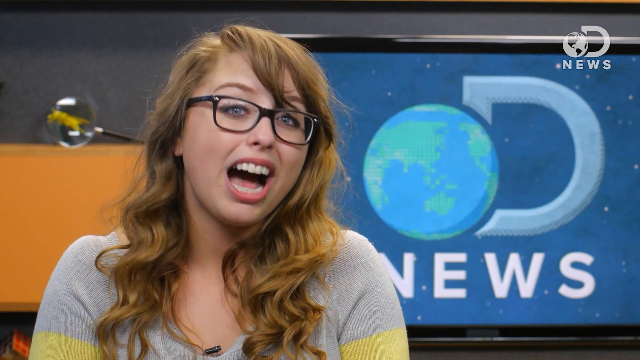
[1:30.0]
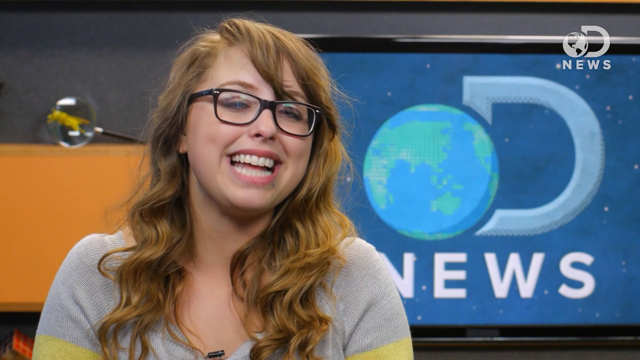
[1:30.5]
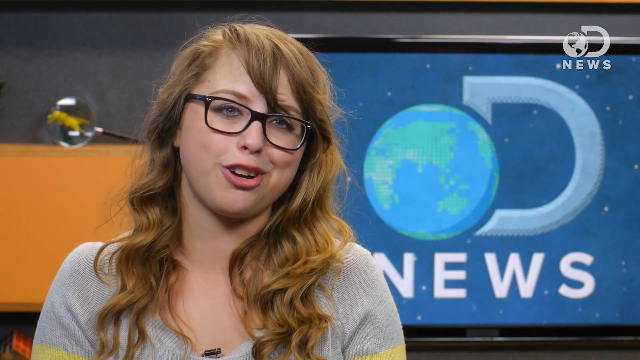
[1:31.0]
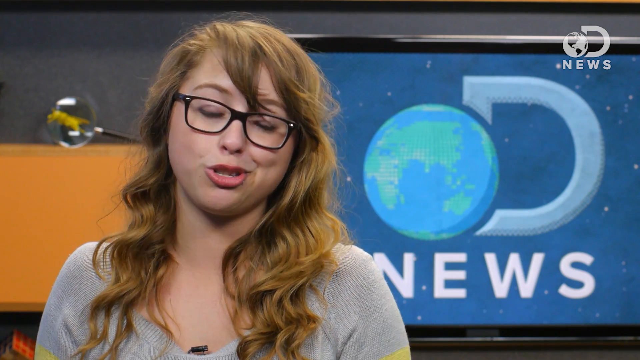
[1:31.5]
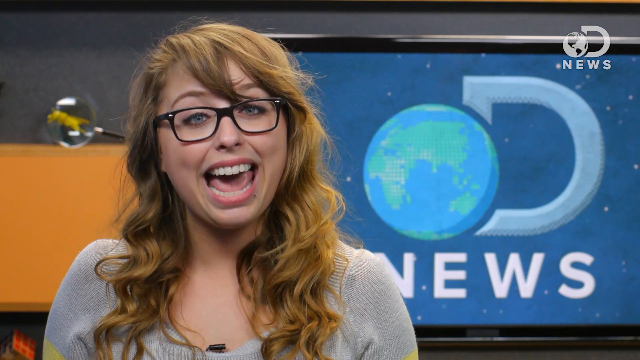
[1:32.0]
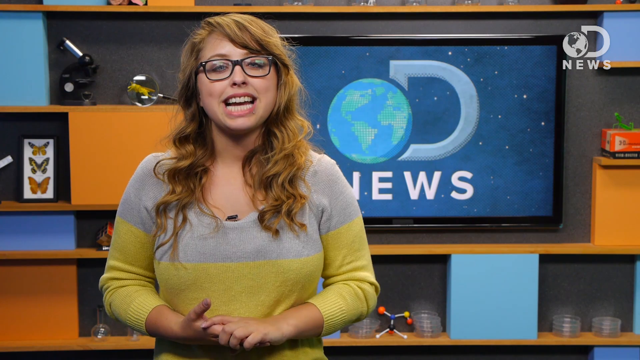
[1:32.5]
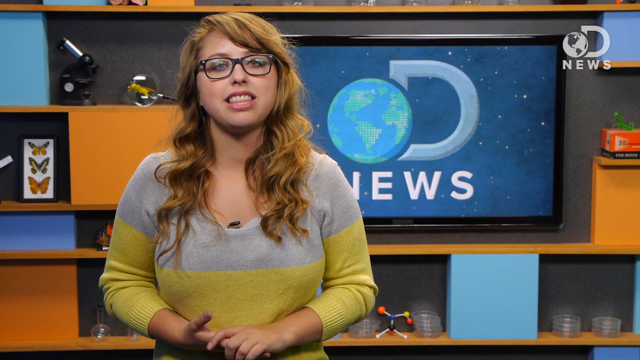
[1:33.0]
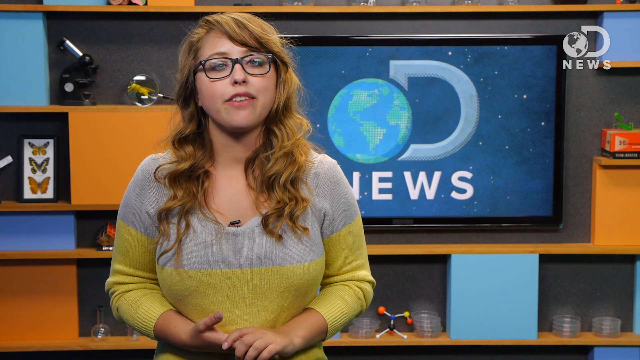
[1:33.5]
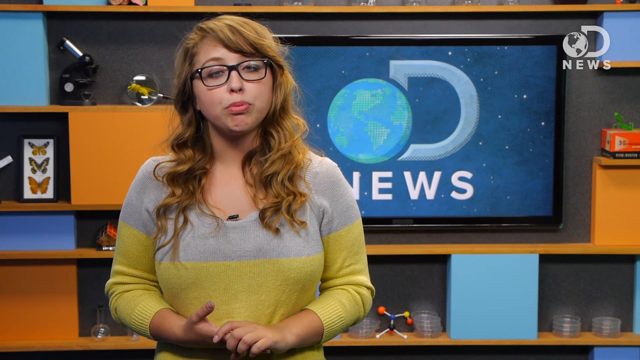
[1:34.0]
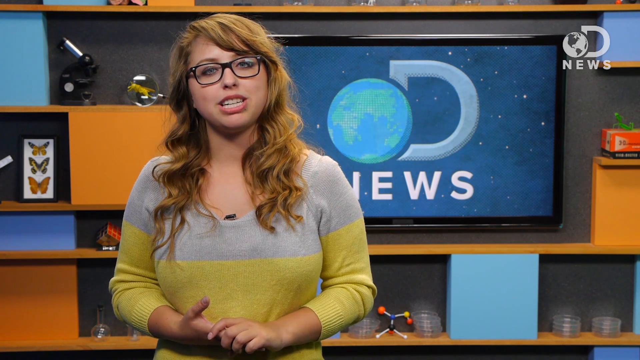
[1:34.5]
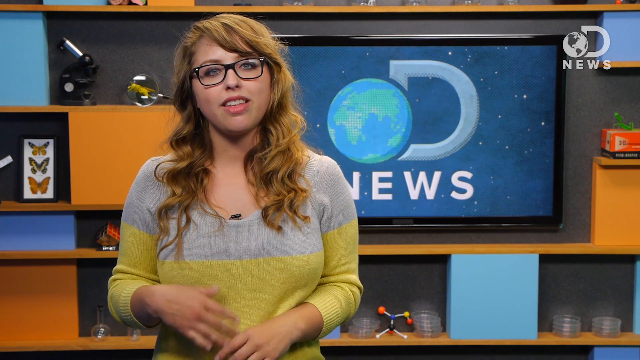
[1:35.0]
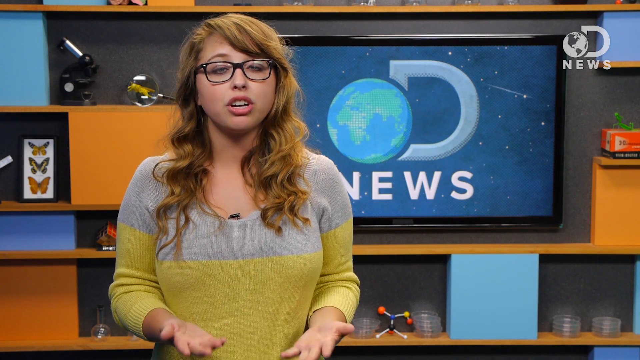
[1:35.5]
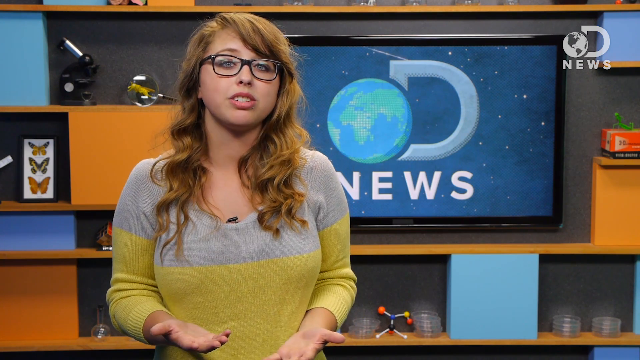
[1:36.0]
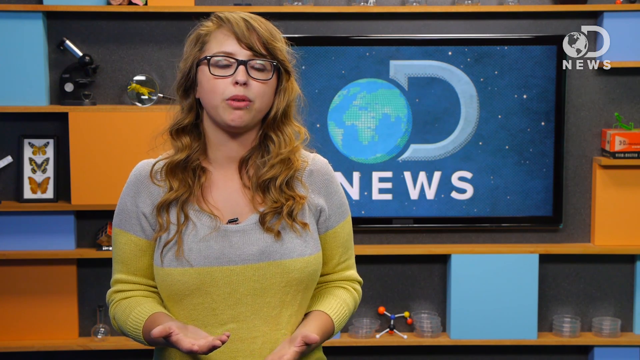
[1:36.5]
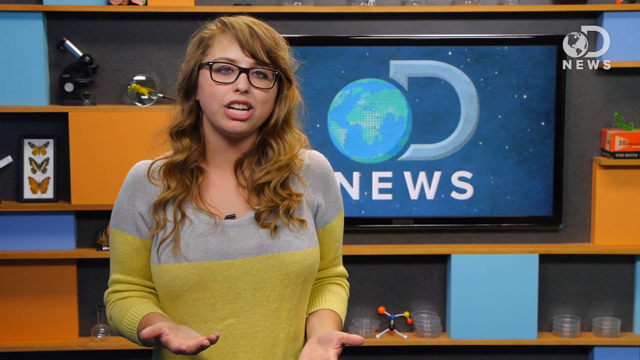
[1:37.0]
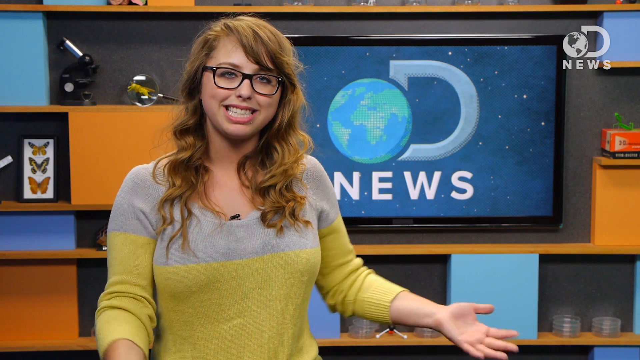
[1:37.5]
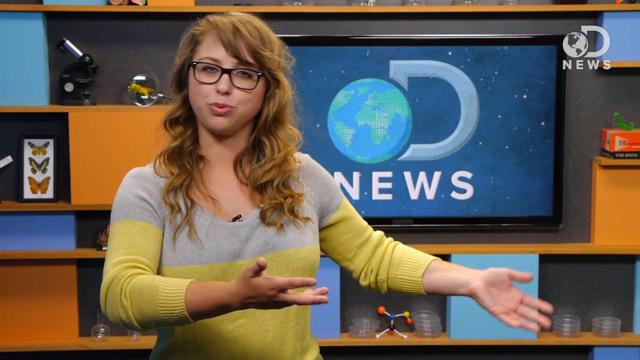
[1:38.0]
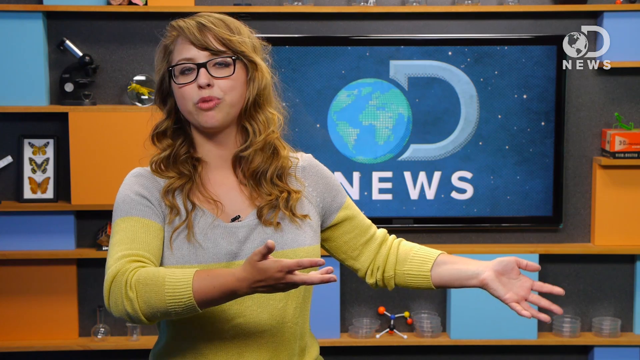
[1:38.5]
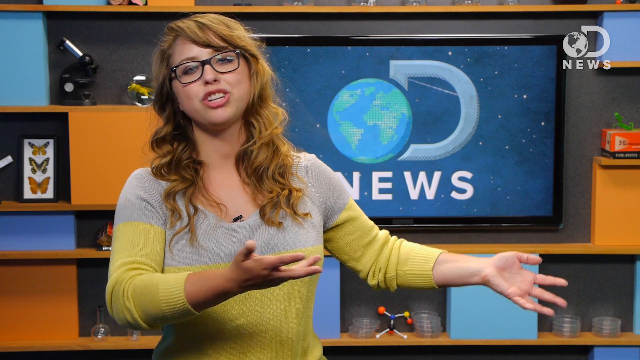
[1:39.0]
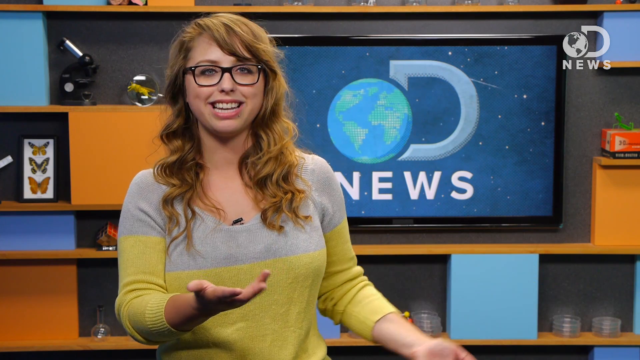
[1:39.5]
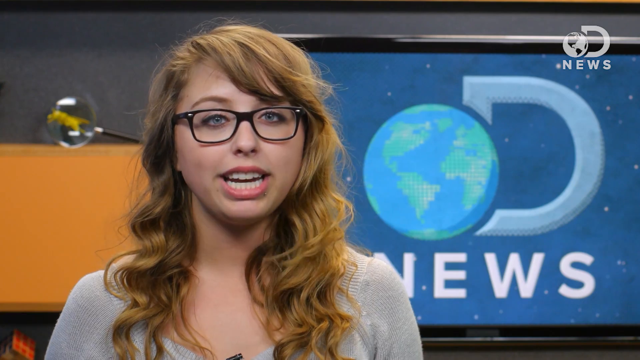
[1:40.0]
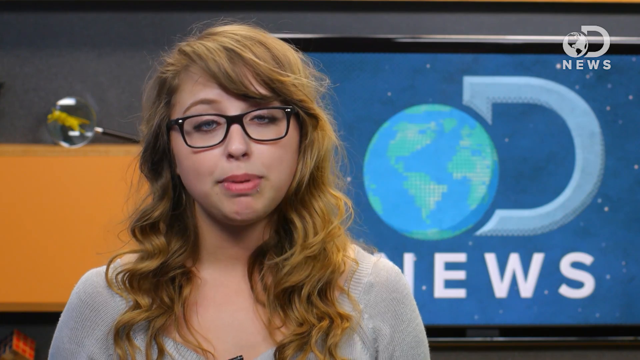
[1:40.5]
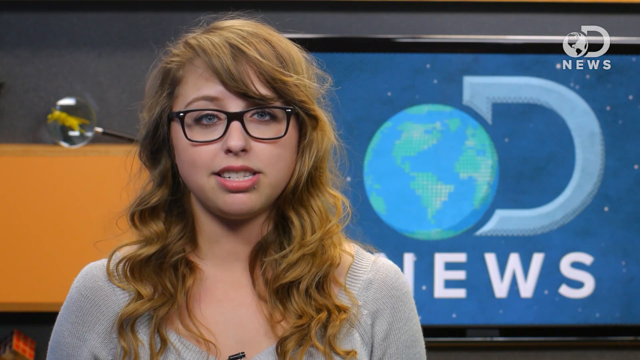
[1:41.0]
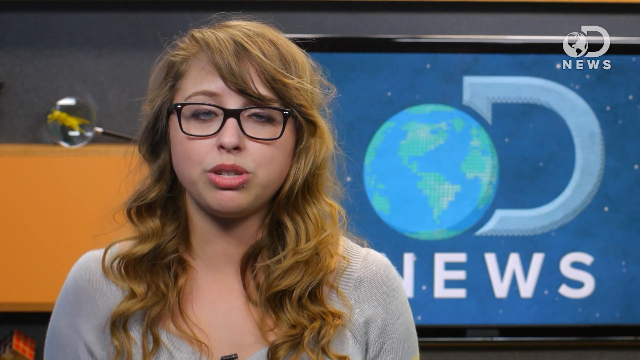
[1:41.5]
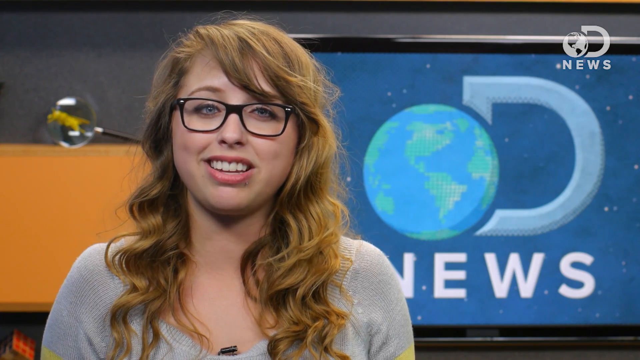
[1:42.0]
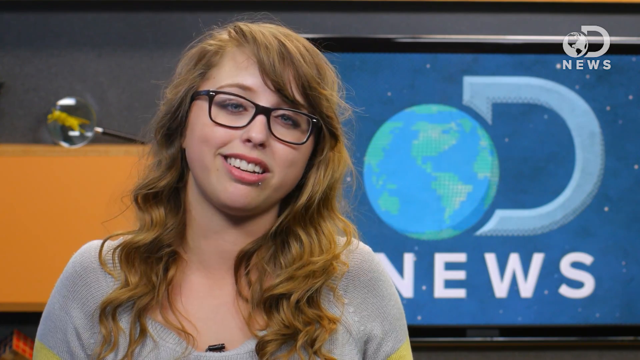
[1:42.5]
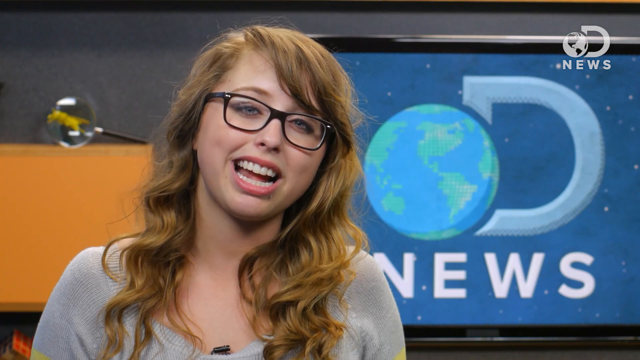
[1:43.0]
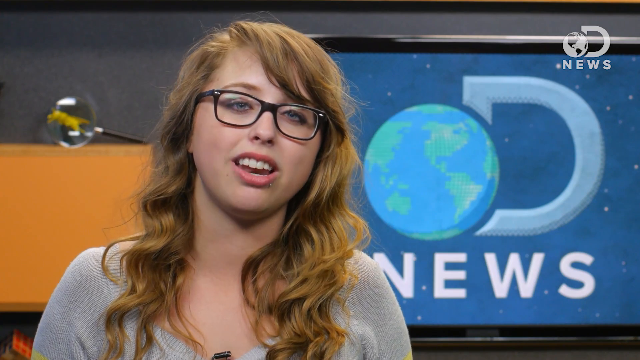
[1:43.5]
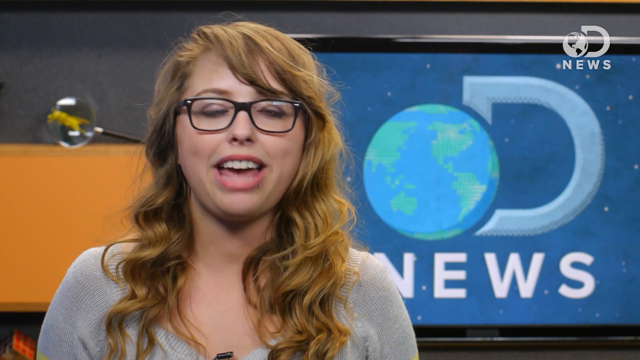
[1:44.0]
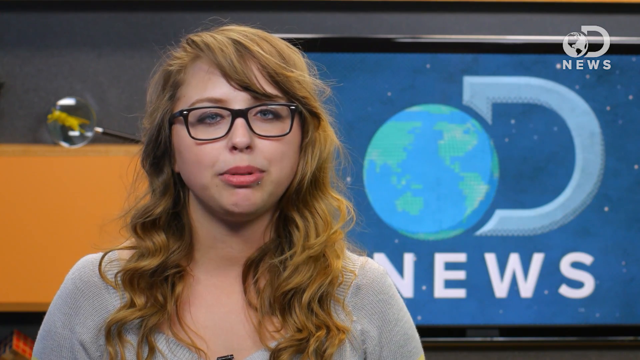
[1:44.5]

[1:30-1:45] Lori, the scientist, is in the classroom setting with the OD News background, talking to her audience and using her hands expressively, pointing and moving them in different directions. There is a microphone near her two-tone grey and green sweater. The plastic DNA model in her classroom is seen more clearly, along with more of the classroom at the bottom. She seems very expressive.